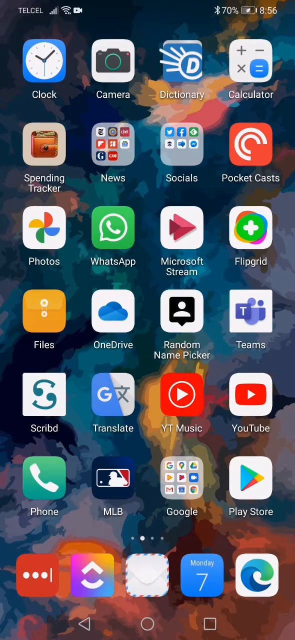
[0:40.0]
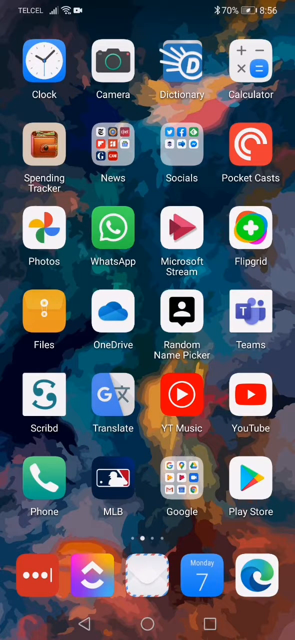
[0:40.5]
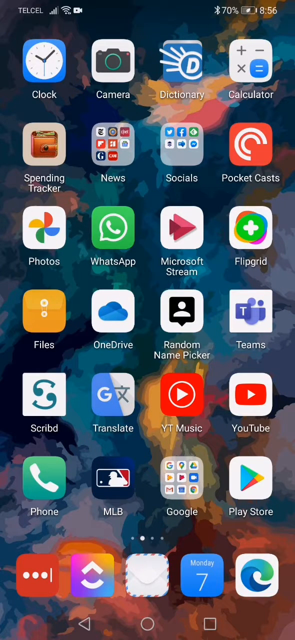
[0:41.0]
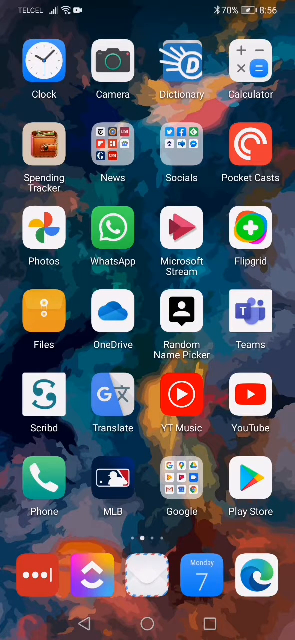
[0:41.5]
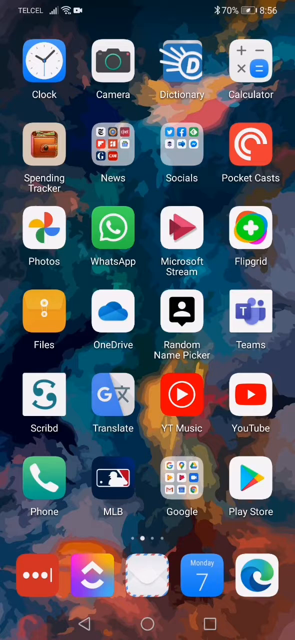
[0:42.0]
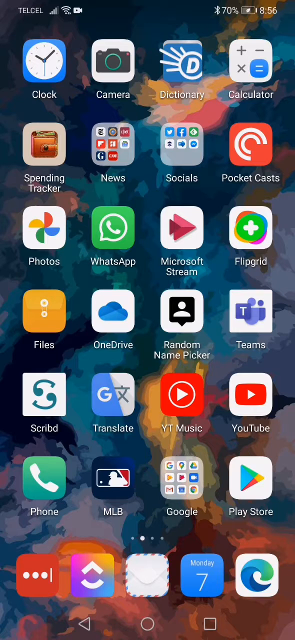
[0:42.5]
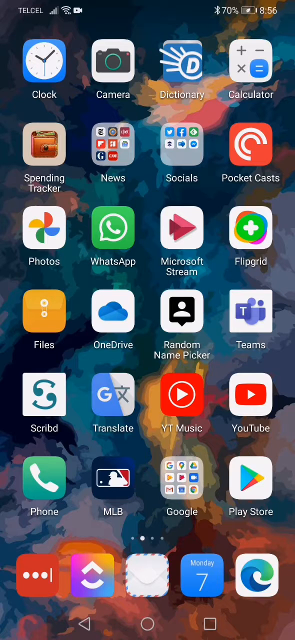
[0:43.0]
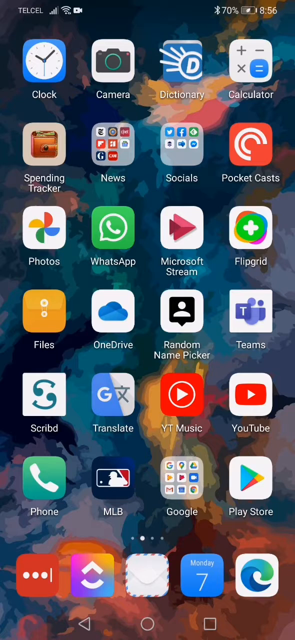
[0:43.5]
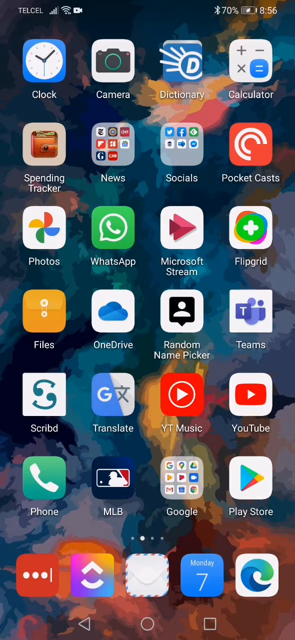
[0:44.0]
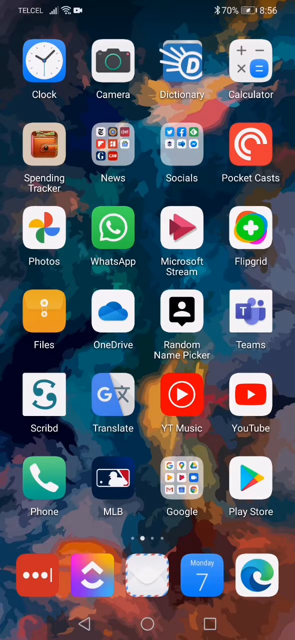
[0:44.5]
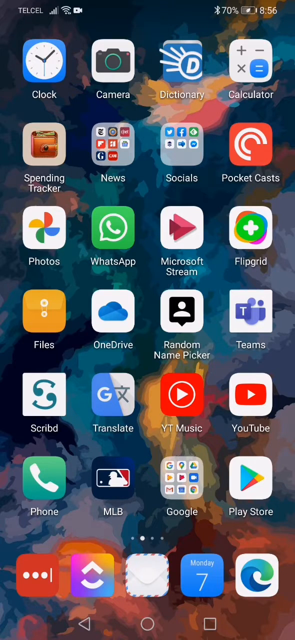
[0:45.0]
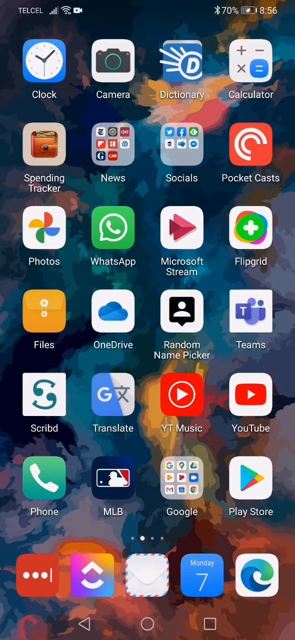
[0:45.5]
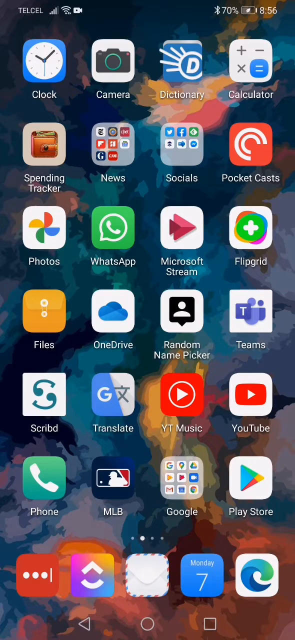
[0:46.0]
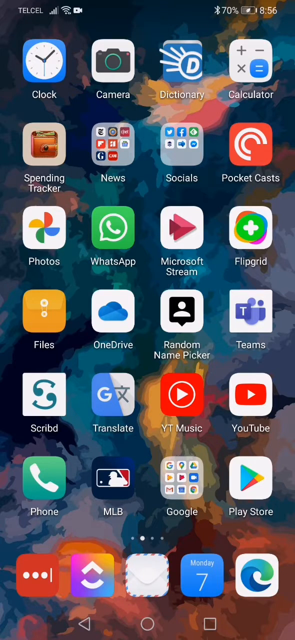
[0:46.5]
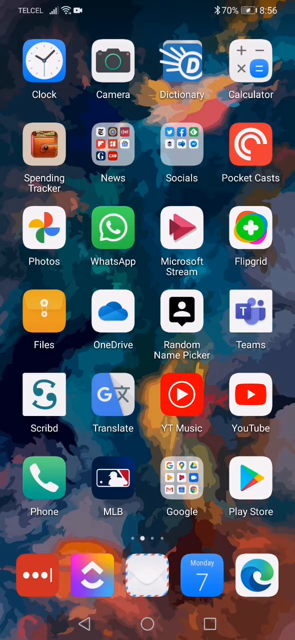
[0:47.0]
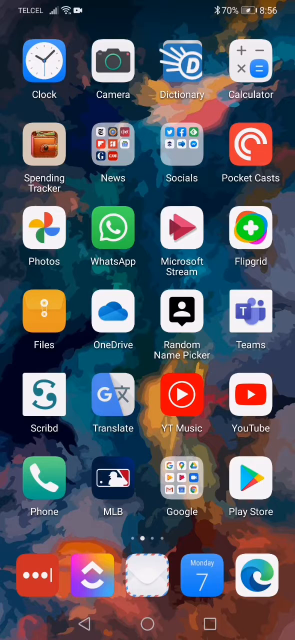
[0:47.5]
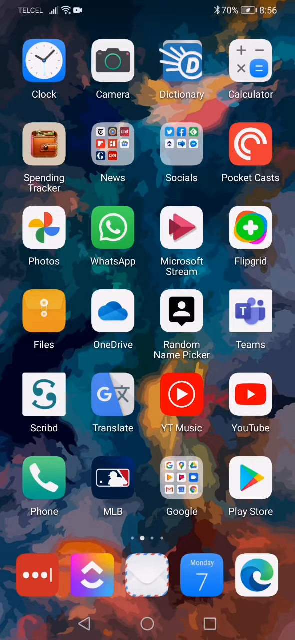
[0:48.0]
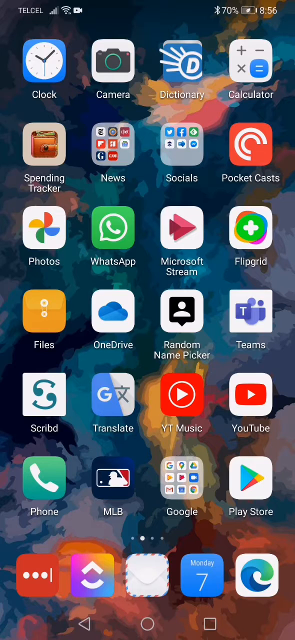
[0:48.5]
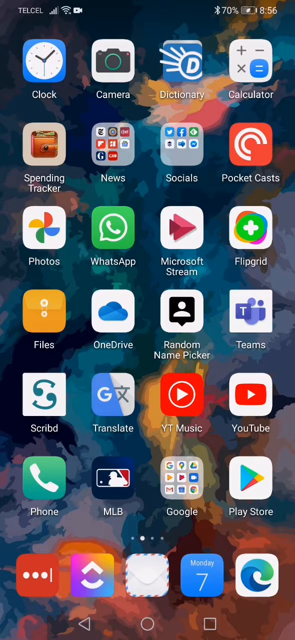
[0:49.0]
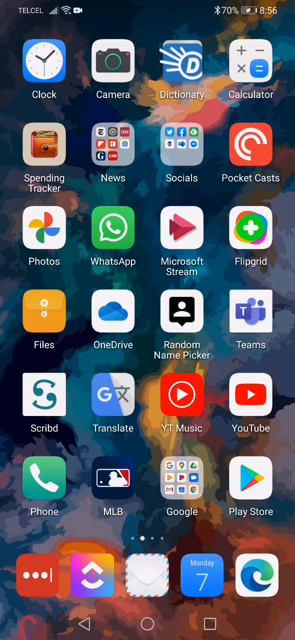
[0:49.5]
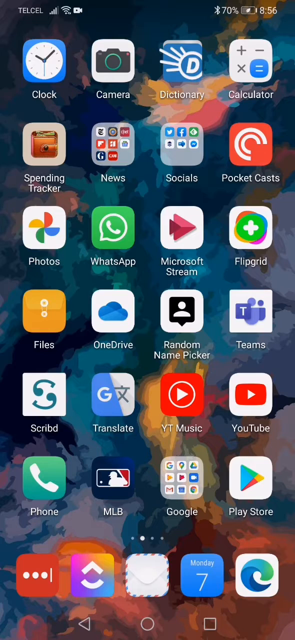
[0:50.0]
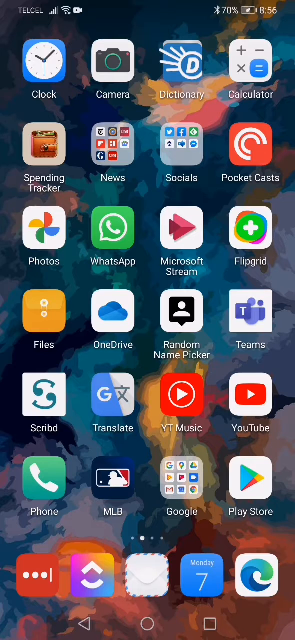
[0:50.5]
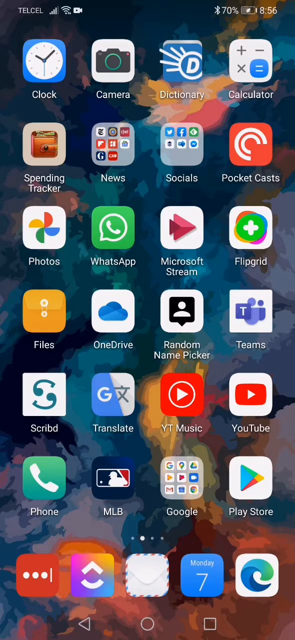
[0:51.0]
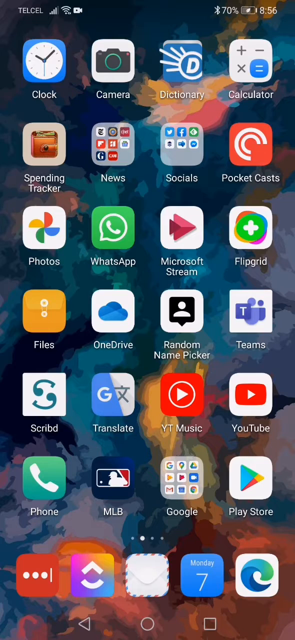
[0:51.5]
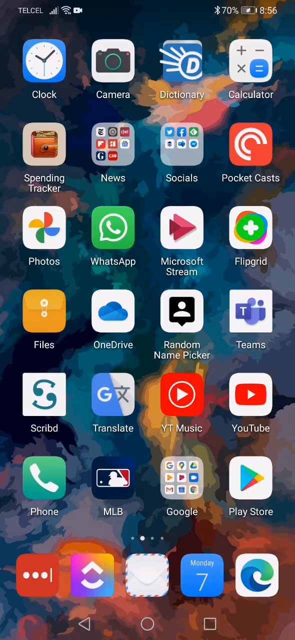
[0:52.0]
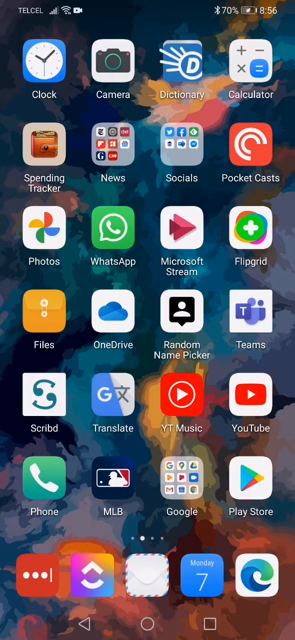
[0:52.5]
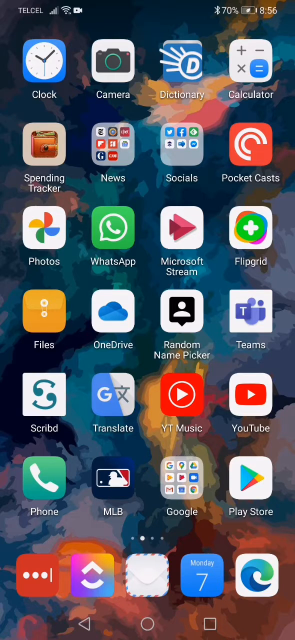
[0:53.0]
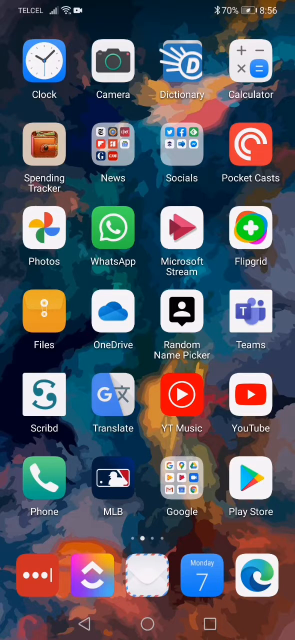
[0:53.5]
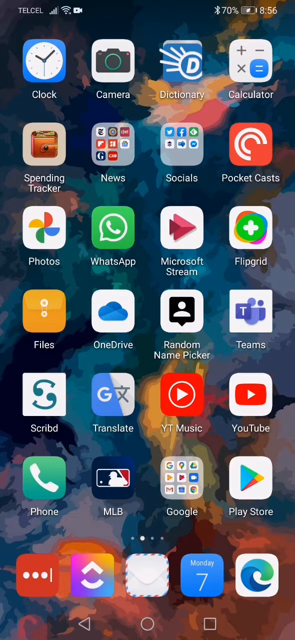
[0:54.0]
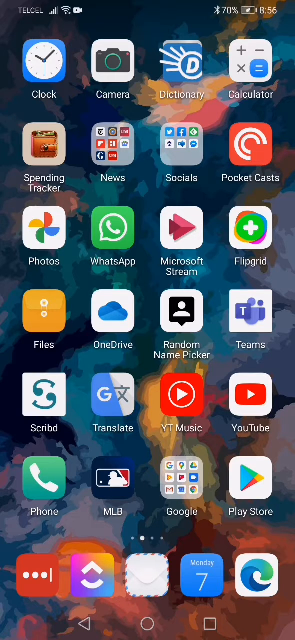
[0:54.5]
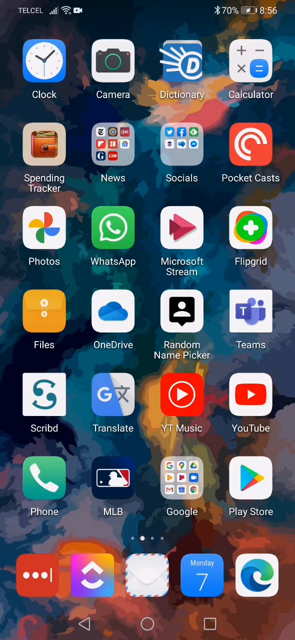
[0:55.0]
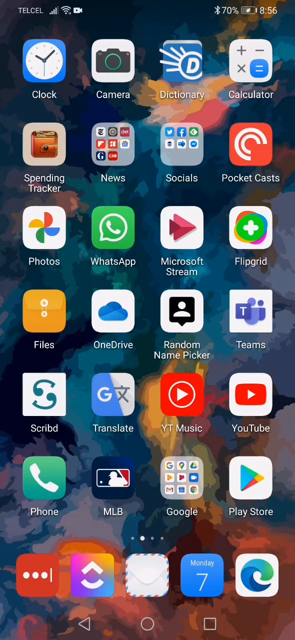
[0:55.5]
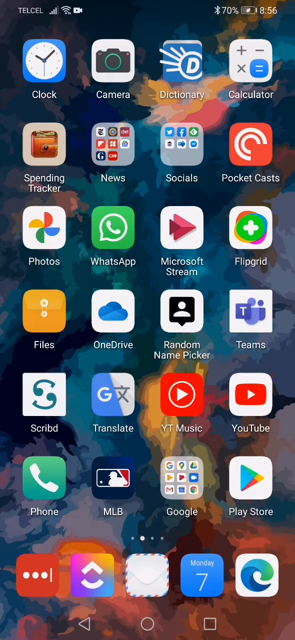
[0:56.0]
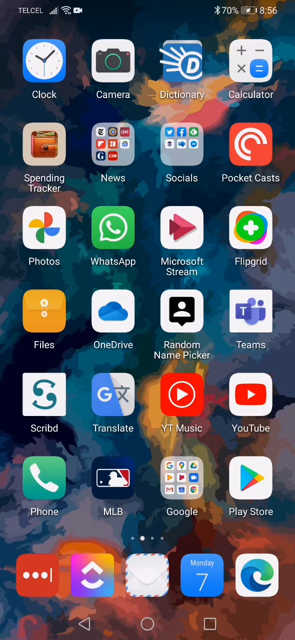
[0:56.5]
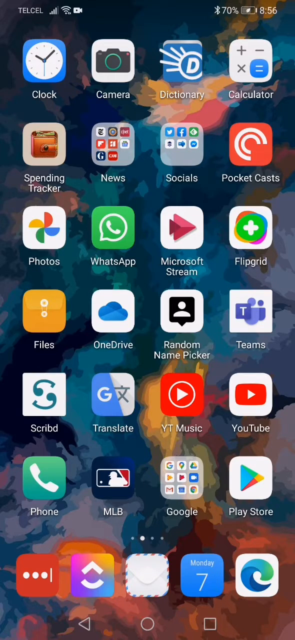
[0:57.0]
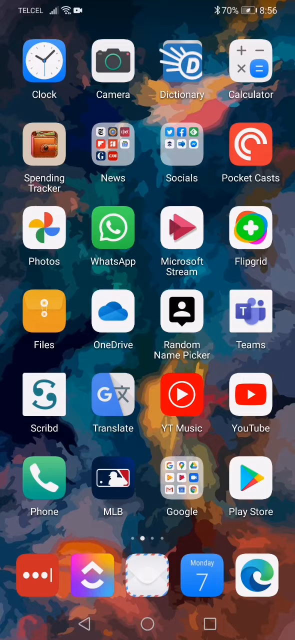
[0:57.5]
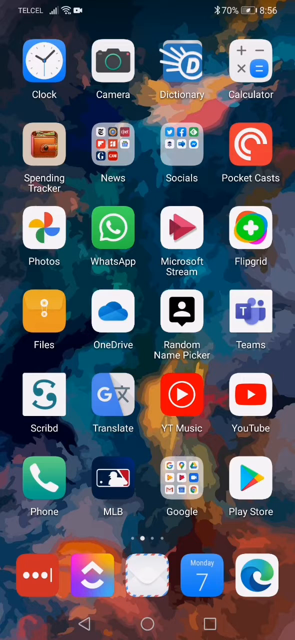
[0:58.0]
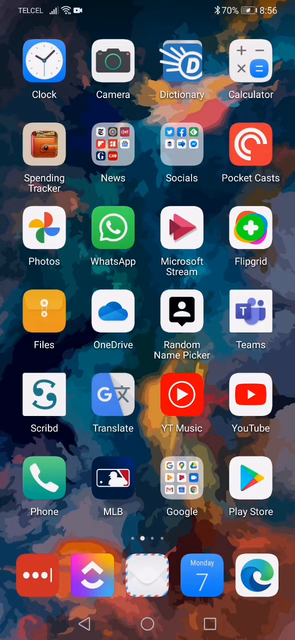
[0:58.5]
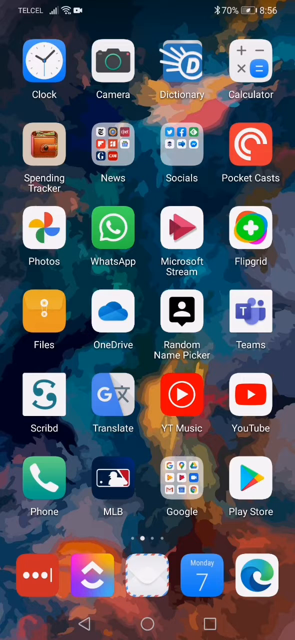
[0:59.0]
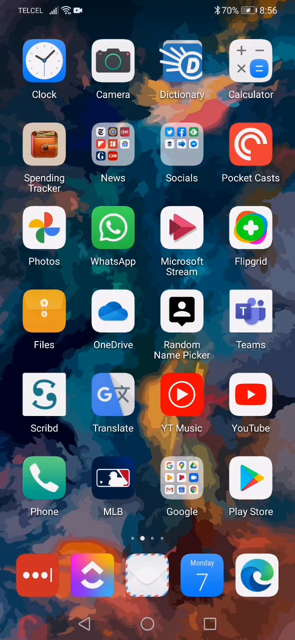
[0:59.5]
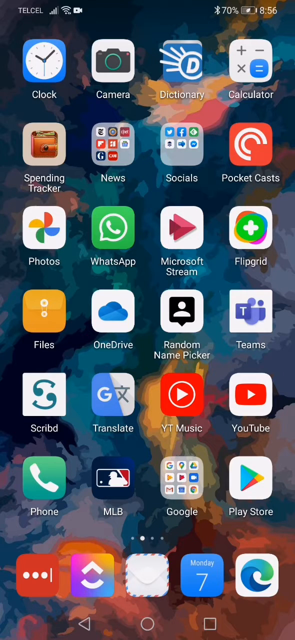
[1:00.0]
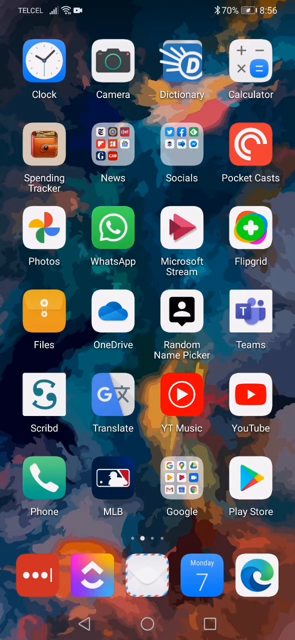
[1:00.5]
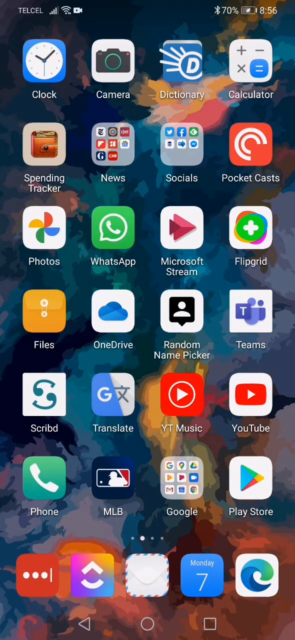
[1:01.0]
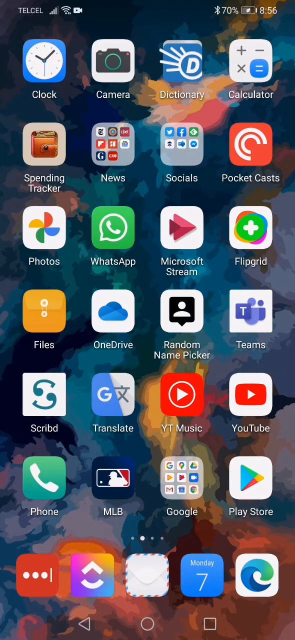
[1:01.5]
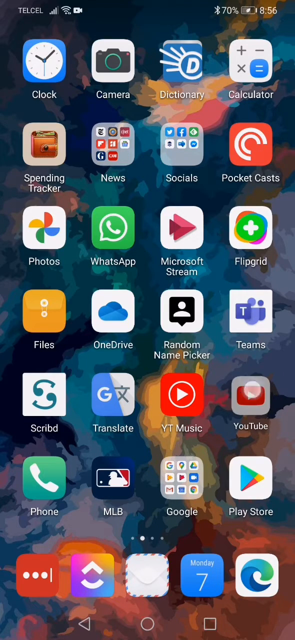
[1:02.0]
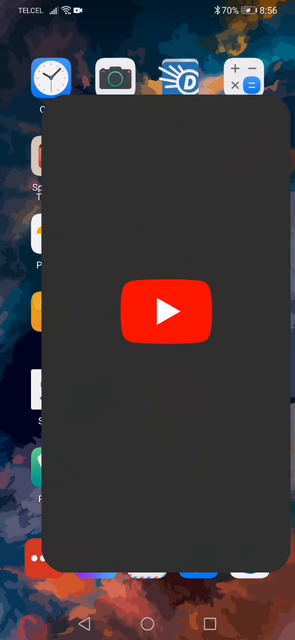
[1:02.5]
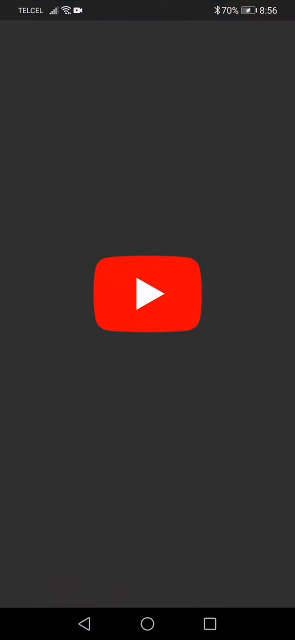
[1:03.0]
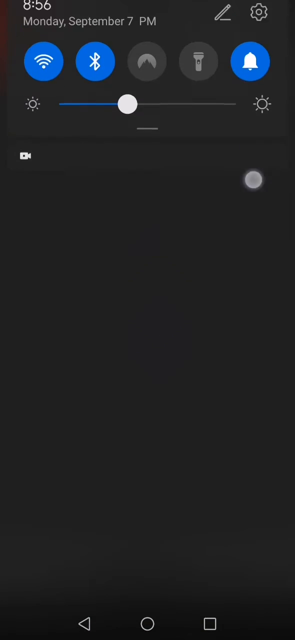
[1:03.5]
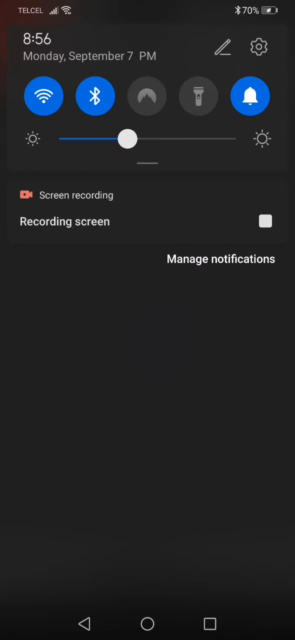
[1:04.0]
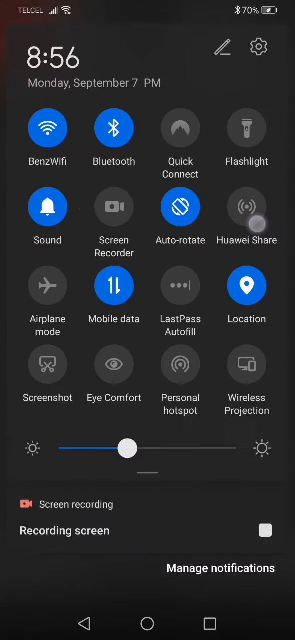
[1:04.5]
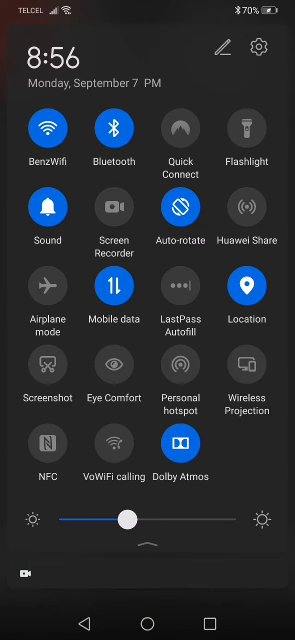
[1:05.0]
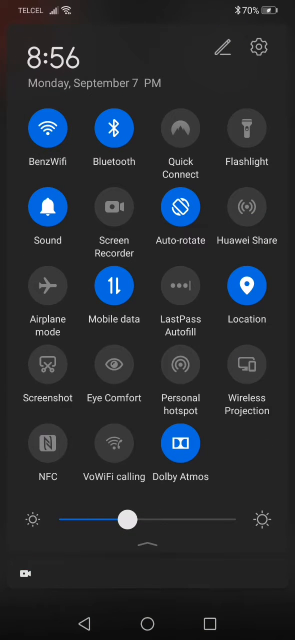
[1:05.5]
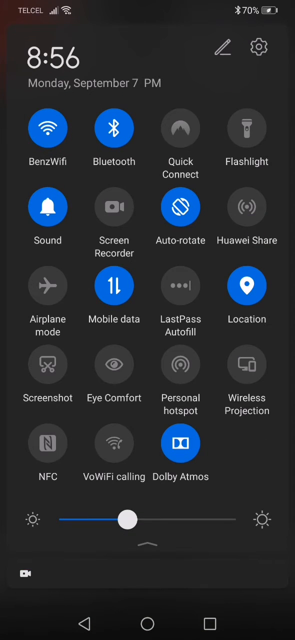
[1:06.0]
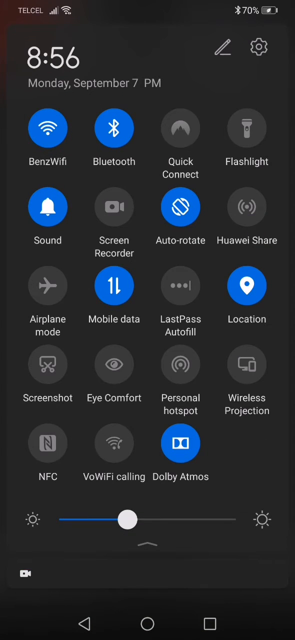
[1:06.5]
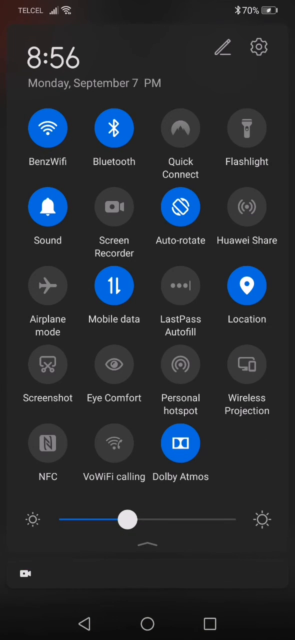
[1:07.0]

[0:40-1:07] YouTube is opened and Suzanne Cecilia R is selected. A man, maybe in his 40s, is recording and shows three men working out: one is on his knees and the other two are ready to do a push-up. He seems to be giving them instructions, apparently starting on the knees, moving onto the arms and then stretching the legs. He also shows how to do a screen recording using his phone, at home. The date shown is Monday the 7th of September at 8:56 p.m. The screen then goes blank.